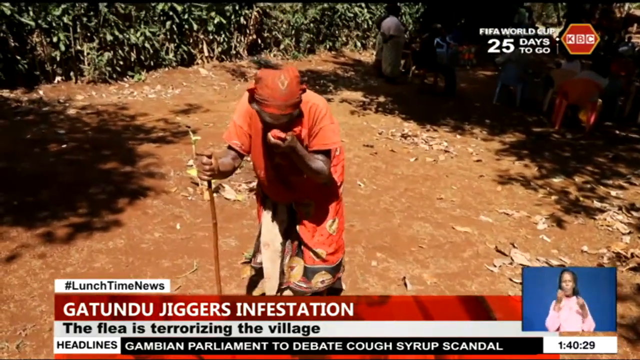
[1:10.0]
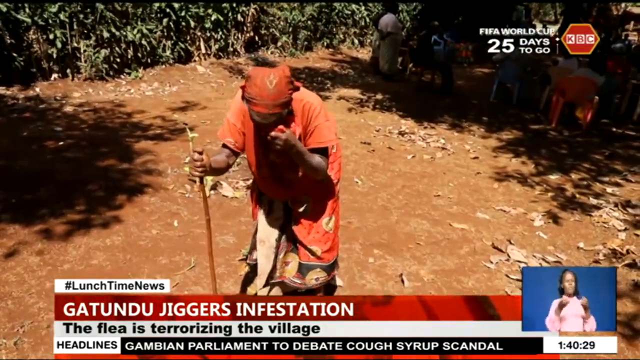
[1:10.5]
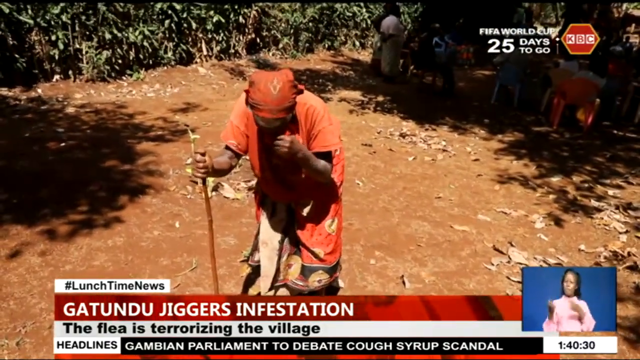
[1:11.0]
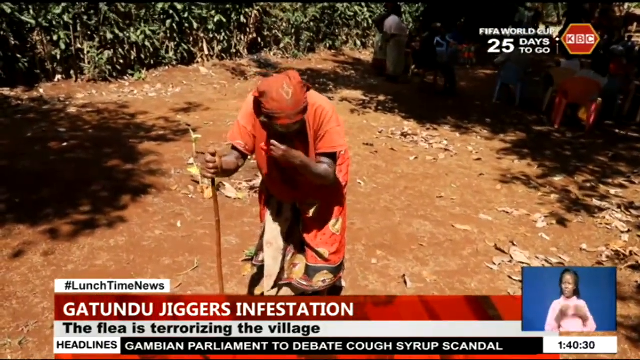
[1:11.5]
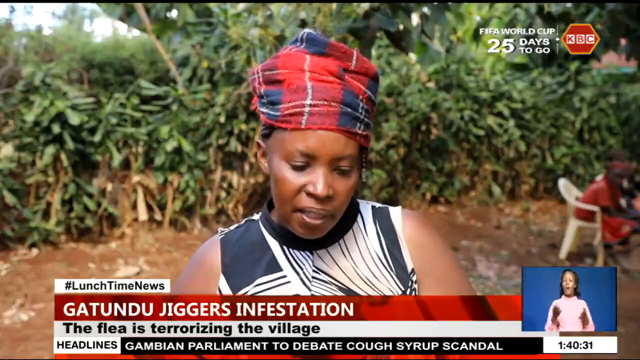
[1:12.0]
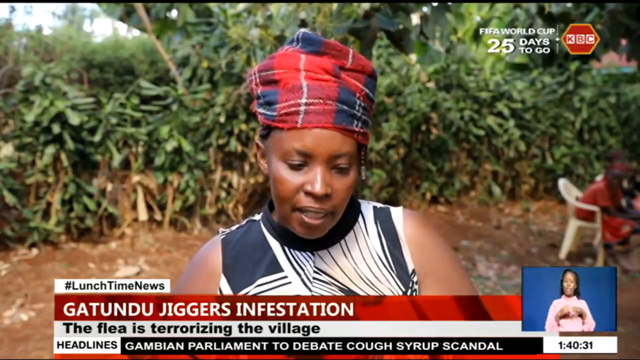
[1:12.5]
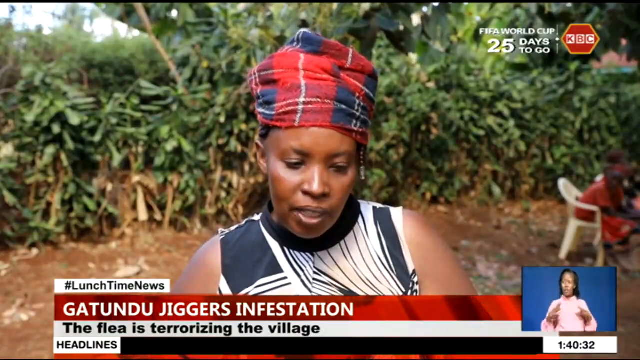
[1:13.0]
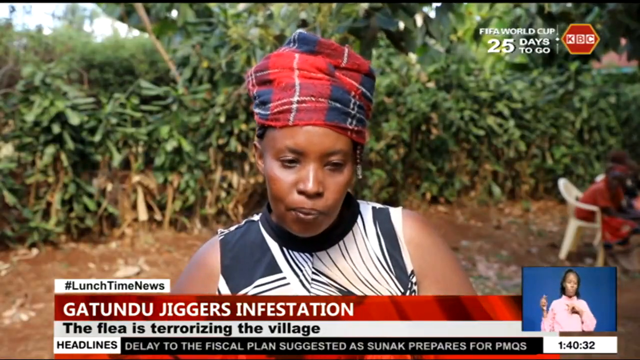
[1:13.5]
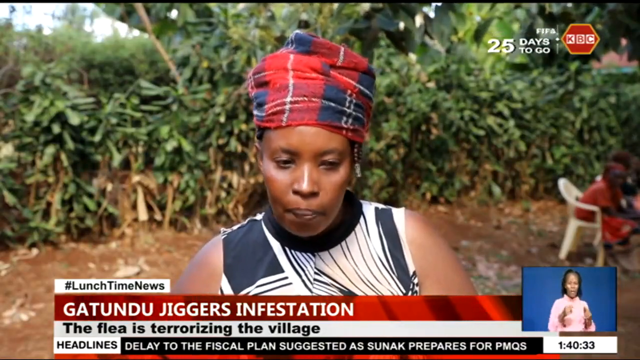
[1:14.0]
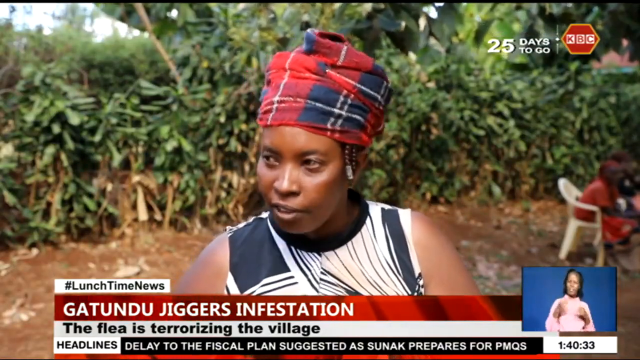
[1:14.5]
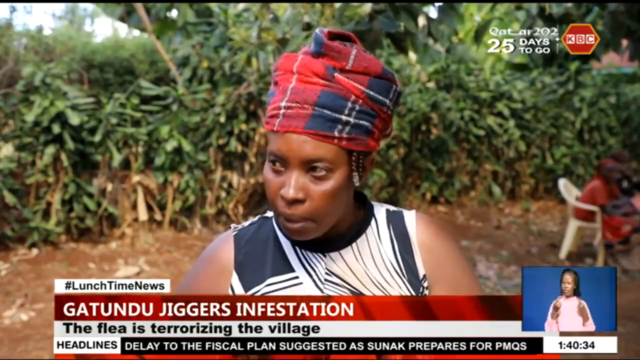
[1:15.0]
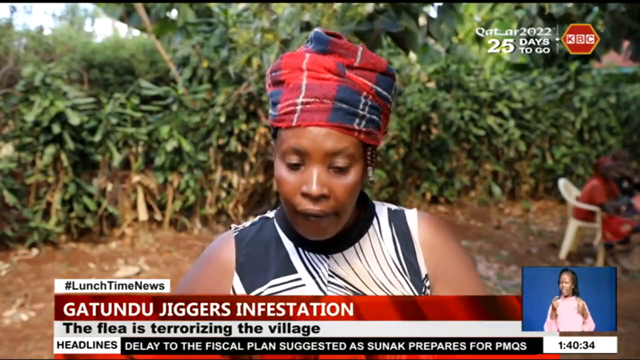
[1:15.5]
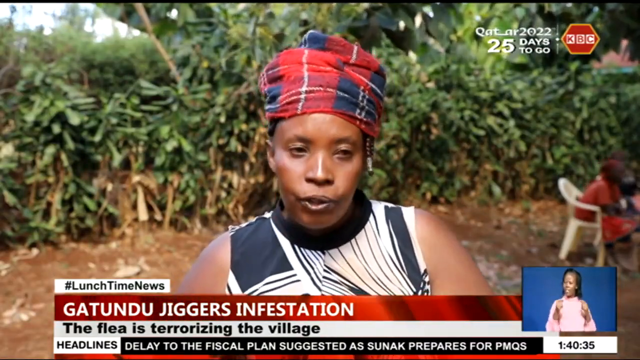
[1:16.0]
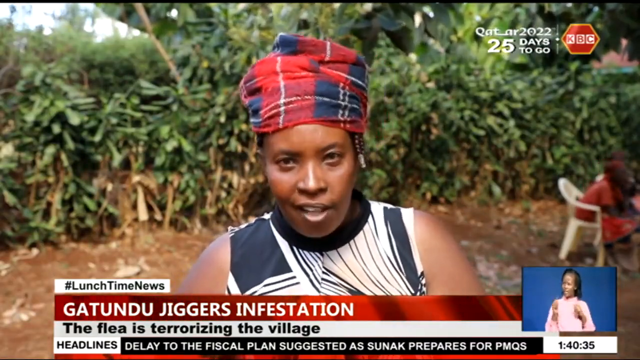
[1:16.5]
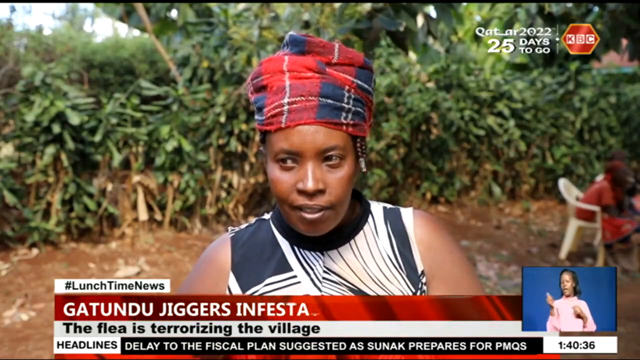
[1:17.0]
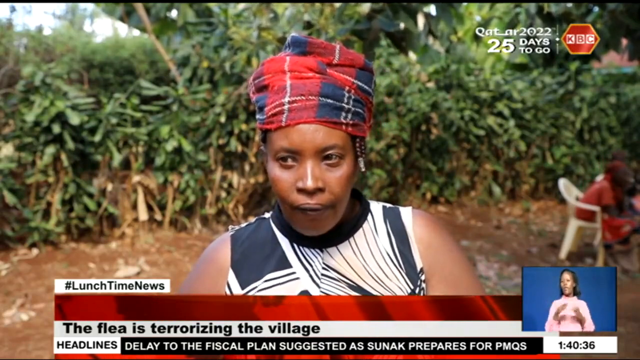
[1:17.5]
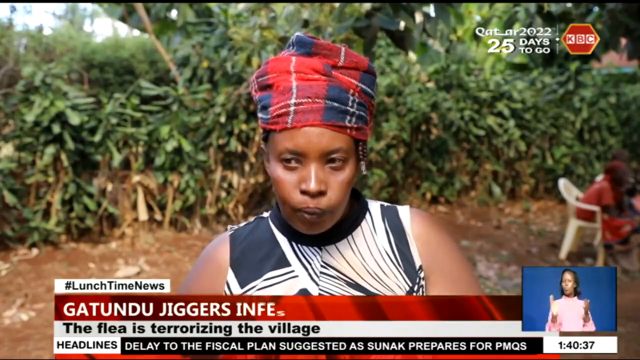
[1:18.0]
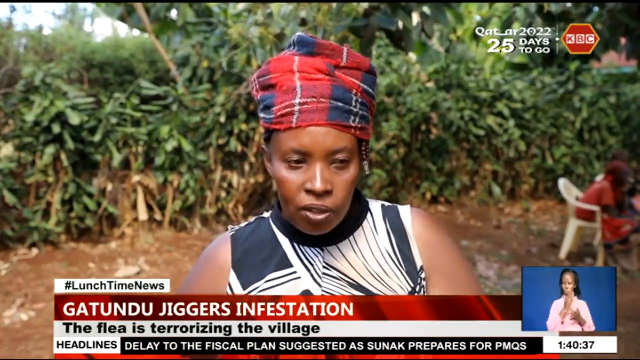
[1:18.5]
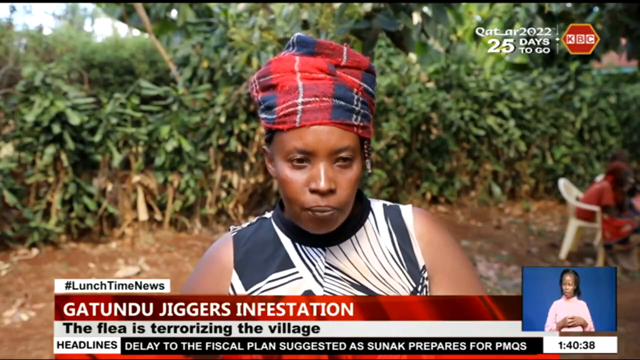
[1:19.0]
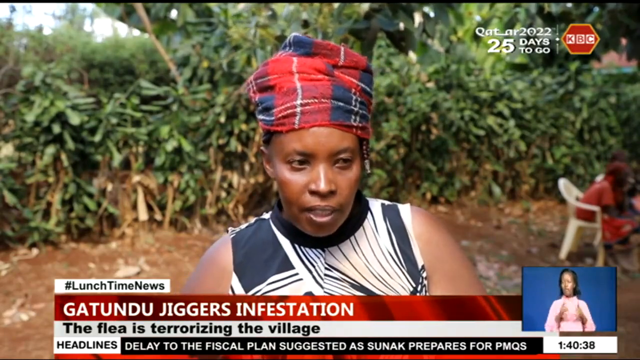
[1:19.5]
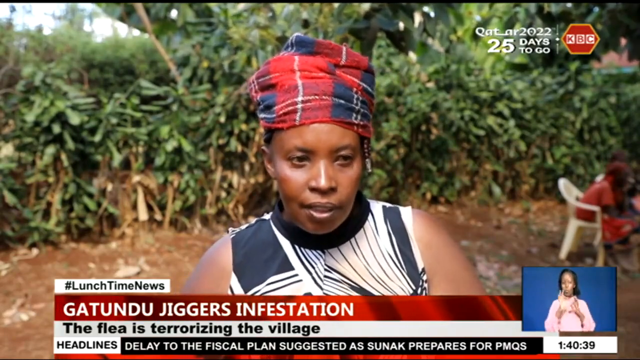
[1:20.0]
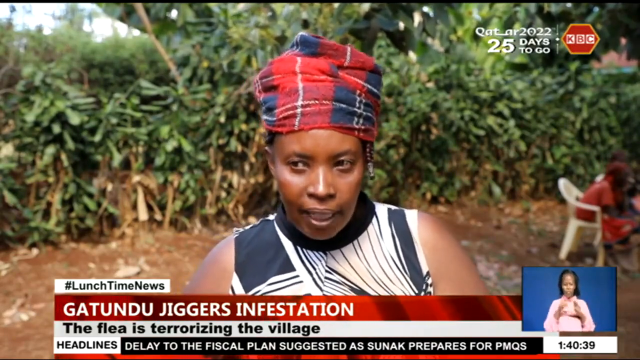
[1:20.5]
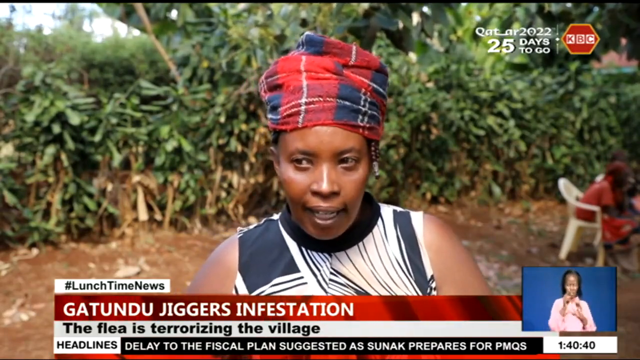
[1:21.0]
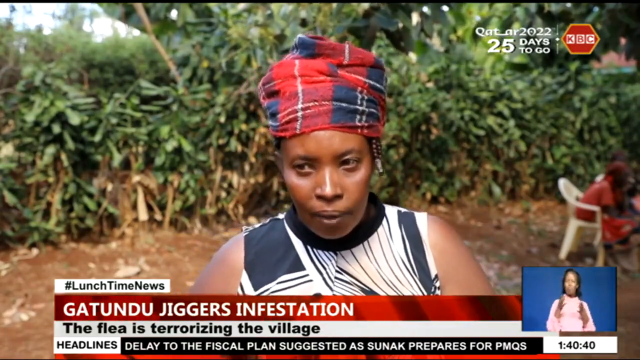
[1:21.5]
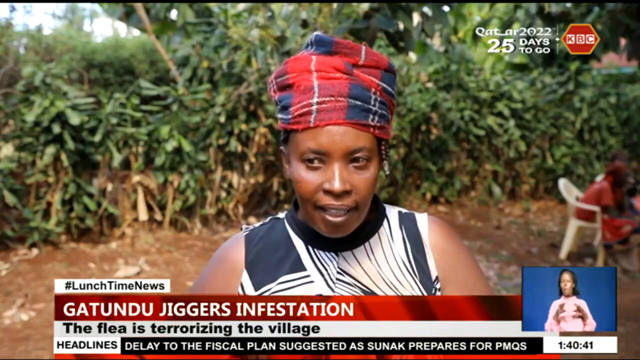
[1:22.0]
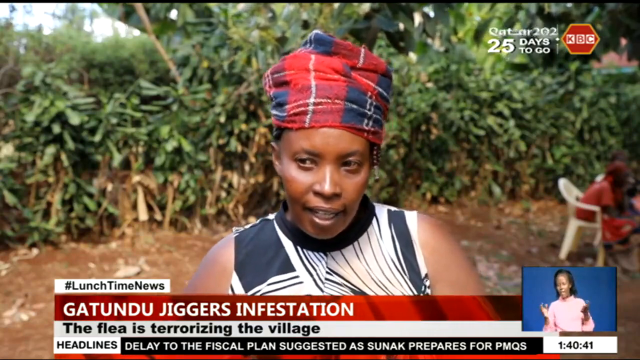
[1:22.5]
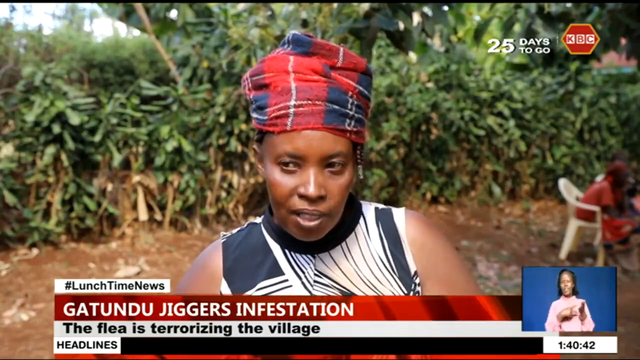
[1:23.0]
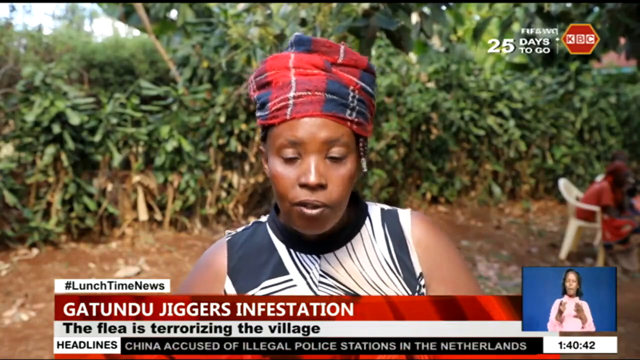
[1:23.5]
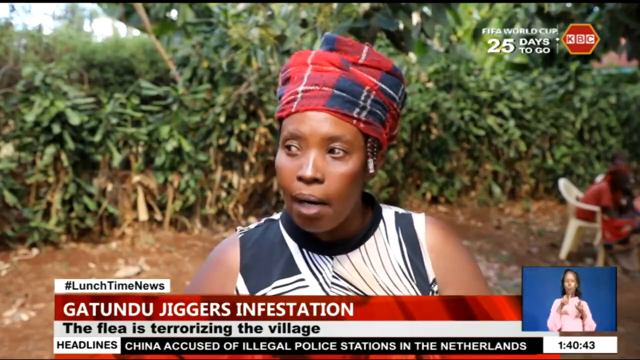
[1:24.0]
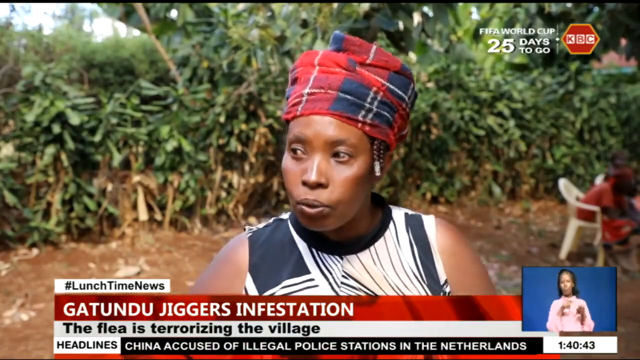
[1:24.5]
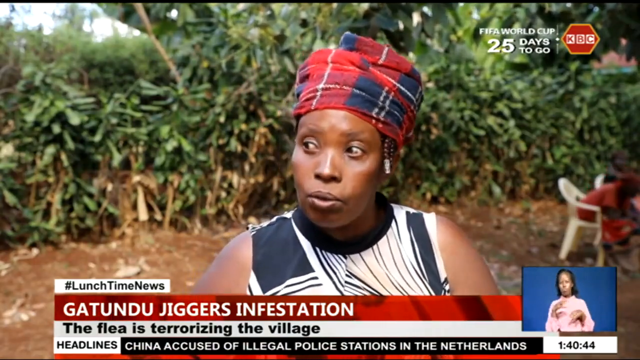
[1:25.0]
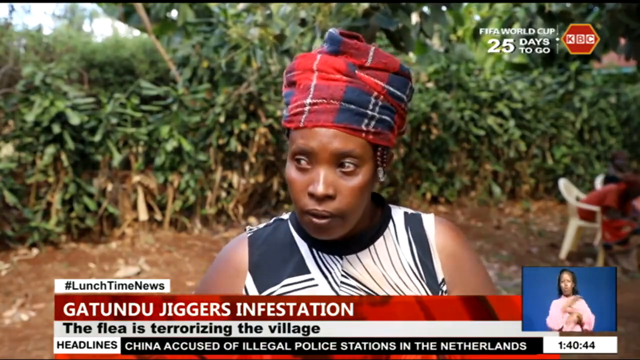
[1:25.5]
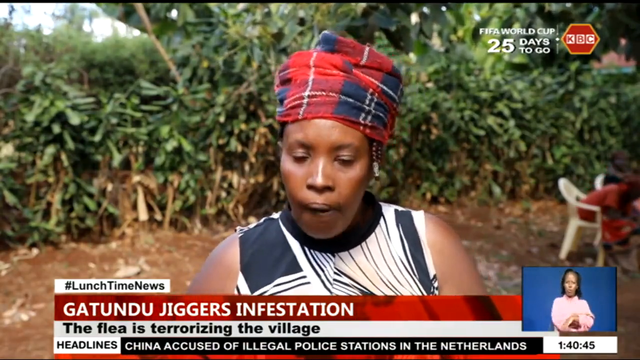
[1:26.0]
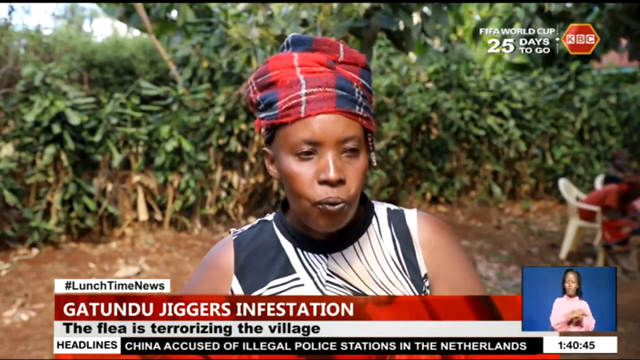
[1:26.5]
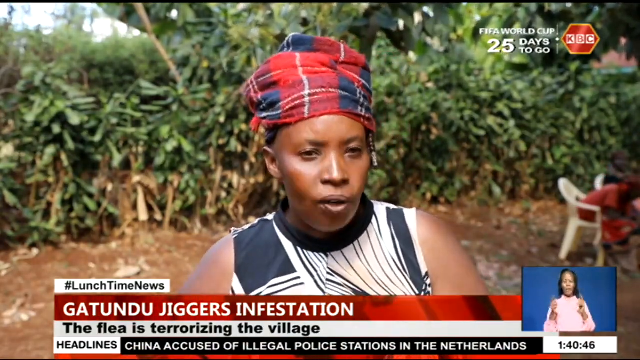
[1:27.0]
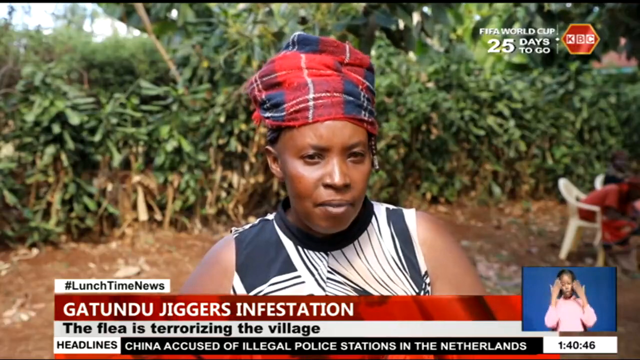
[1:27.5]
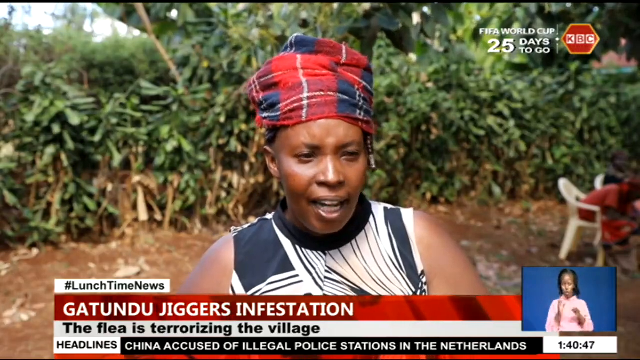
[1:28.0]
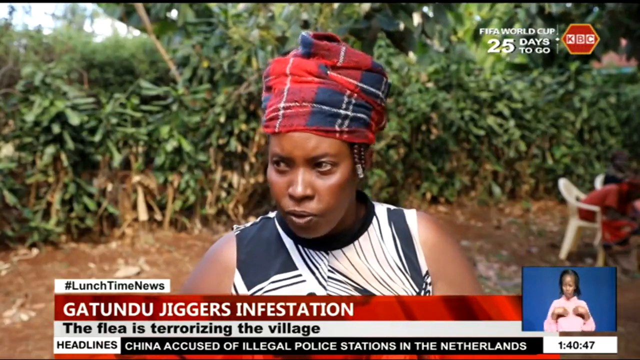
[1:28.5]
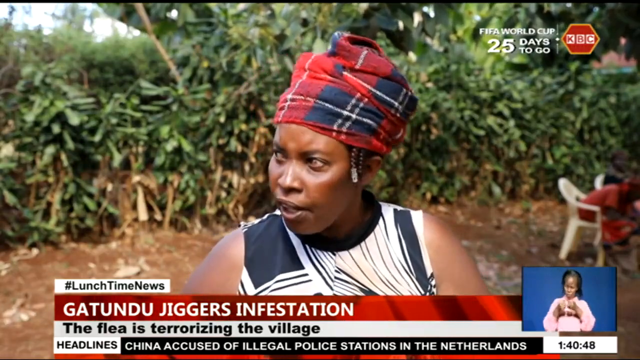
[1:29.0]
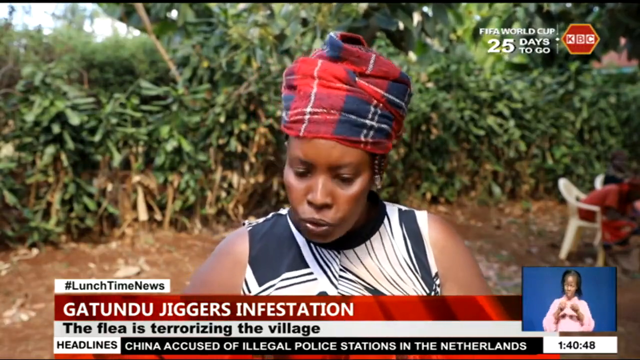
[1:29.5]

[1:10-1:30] A woman in an orange dress and orange headscarf wipes her brow with an orange towel. She is holding a thin brown cane and walking through a dirt area. In the back, black, brown-skinned people appear to be sitting, and some are standing, on the dirt pavement. A black woman, a sign language interpreter, is in the bottom right. At the bottom is "#lunchtime news. Gatundu Jiggers infestation. The flea is terrorizing the village." In the top right is "FIFA World Cup 25 days to go" and "KBC." The scene moves to a woman with a red, white and blue headscarf tied around her head, wearing a black and white sleeveless top. To her right, two people are sitting in white lawn chairs, with green bushes behind them. She is speaking and looking to the left.